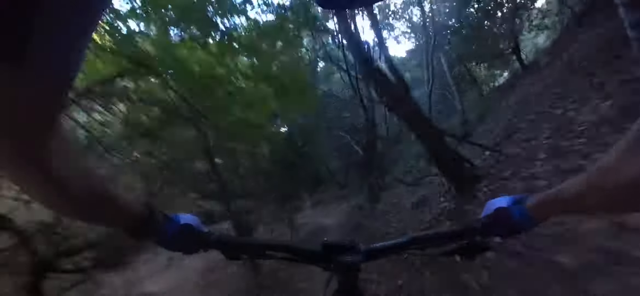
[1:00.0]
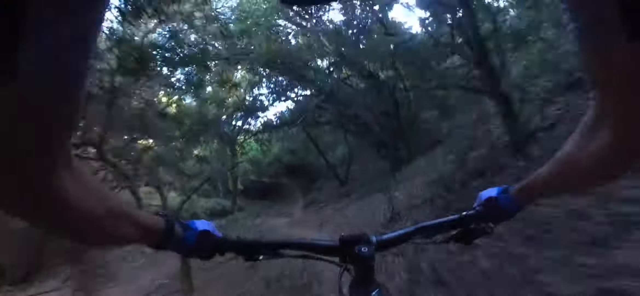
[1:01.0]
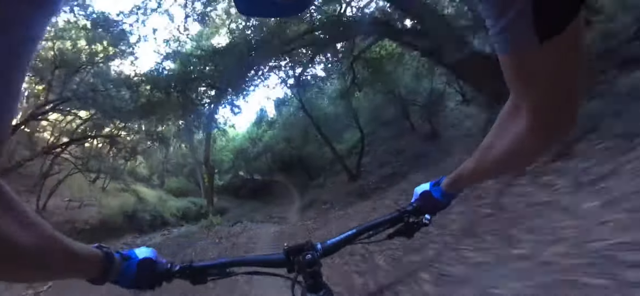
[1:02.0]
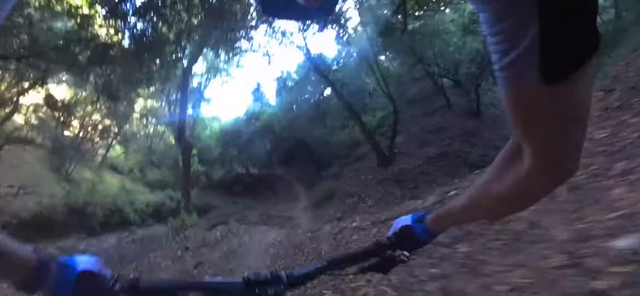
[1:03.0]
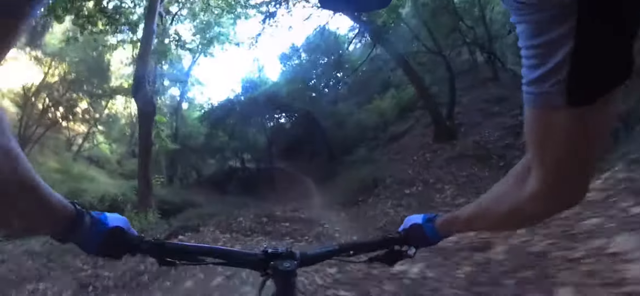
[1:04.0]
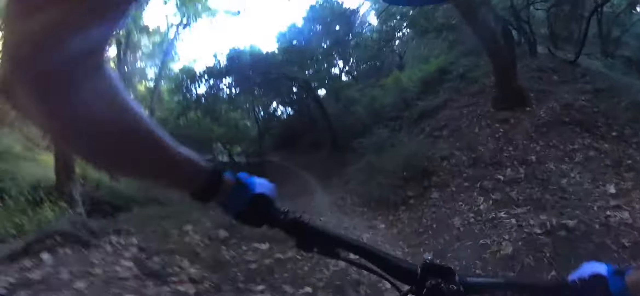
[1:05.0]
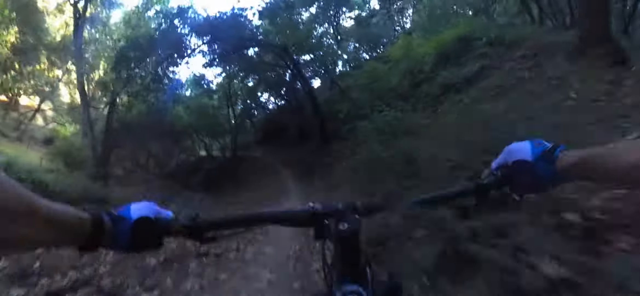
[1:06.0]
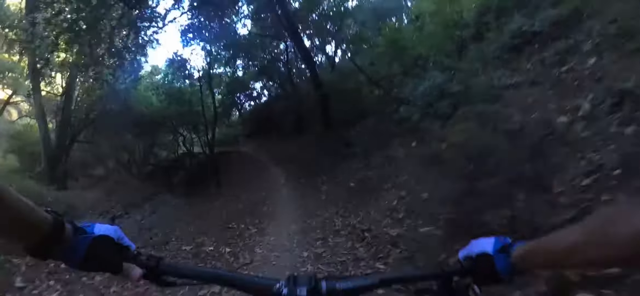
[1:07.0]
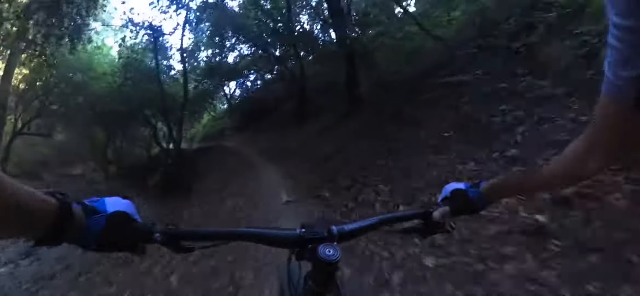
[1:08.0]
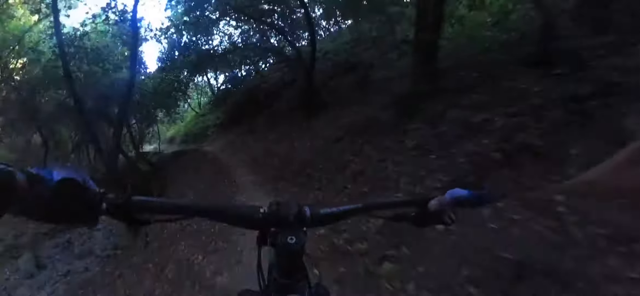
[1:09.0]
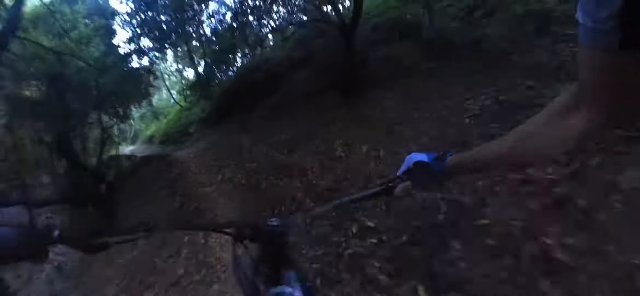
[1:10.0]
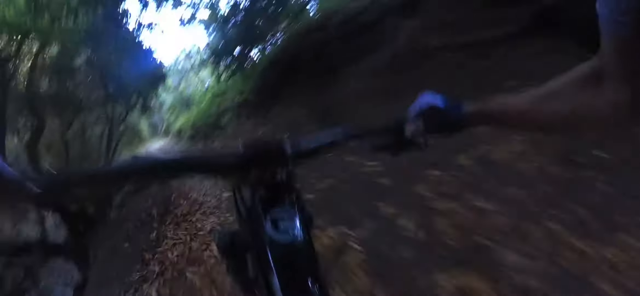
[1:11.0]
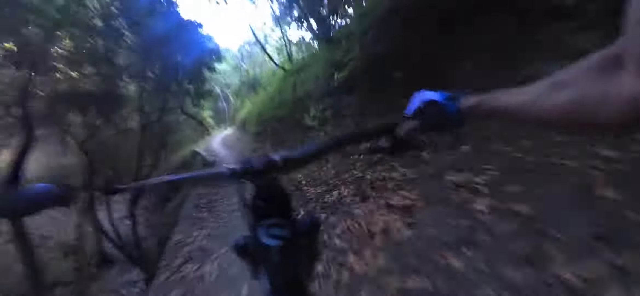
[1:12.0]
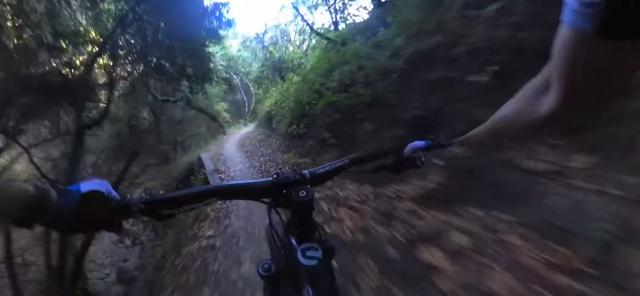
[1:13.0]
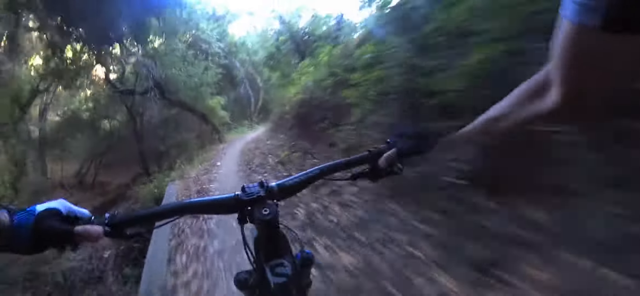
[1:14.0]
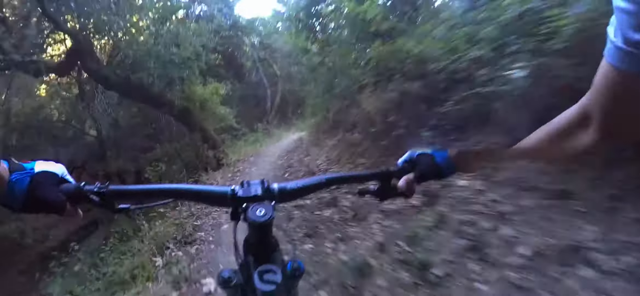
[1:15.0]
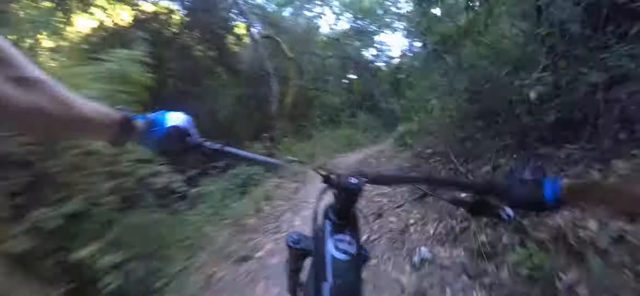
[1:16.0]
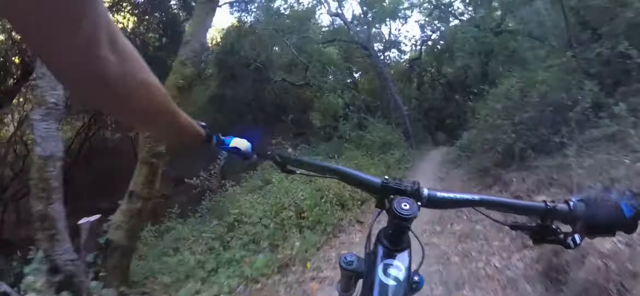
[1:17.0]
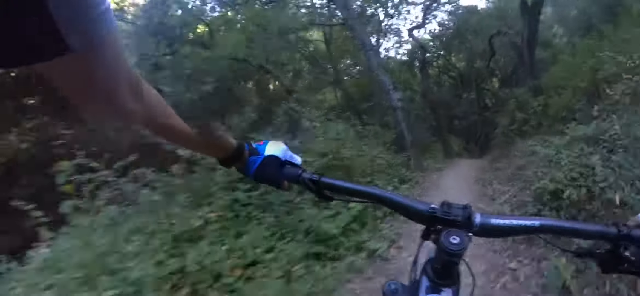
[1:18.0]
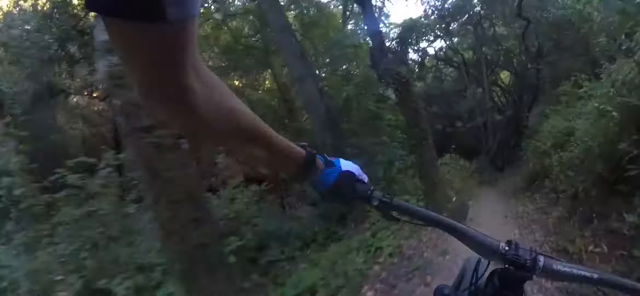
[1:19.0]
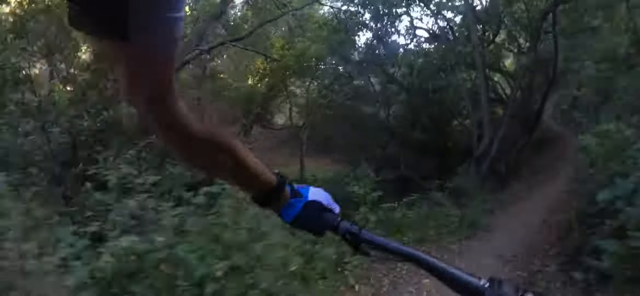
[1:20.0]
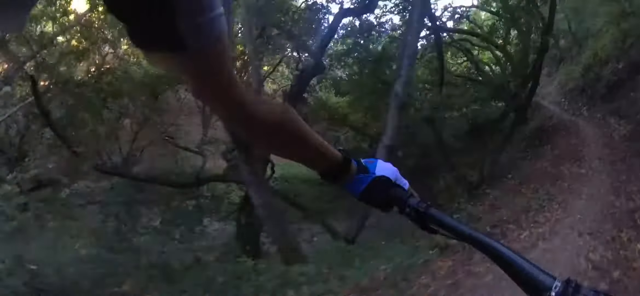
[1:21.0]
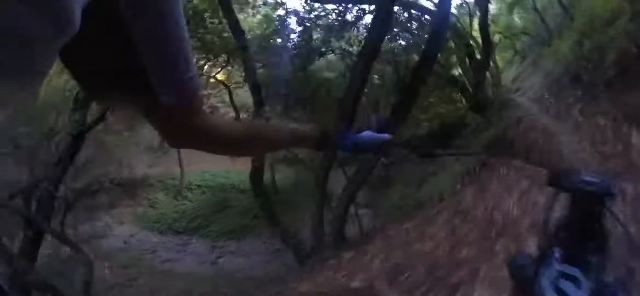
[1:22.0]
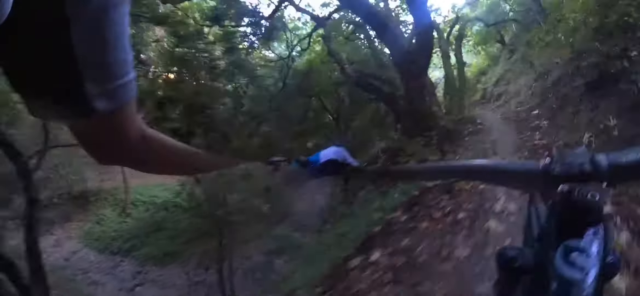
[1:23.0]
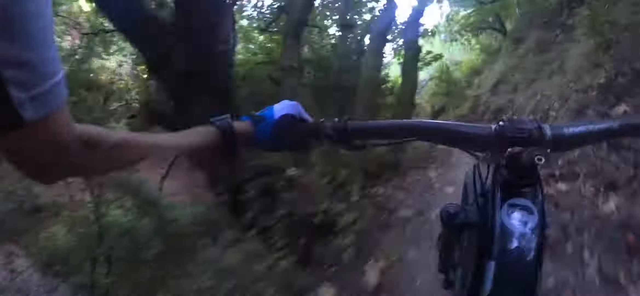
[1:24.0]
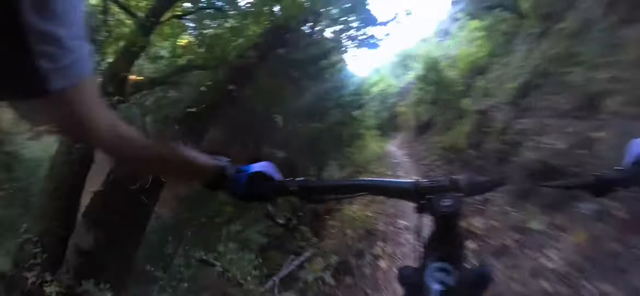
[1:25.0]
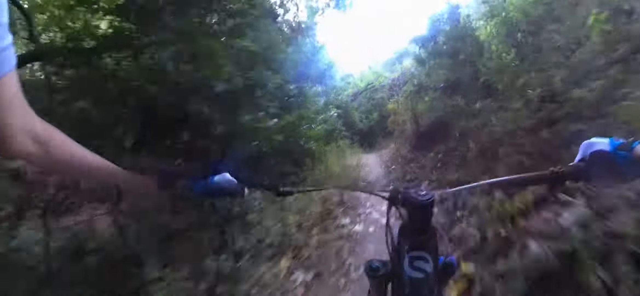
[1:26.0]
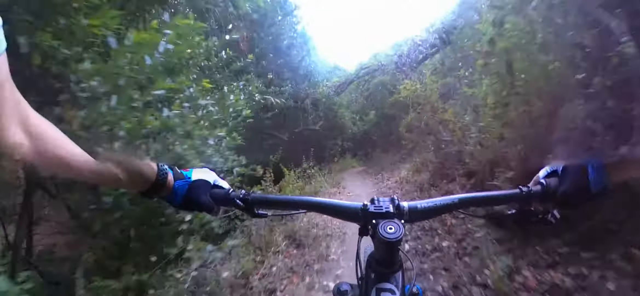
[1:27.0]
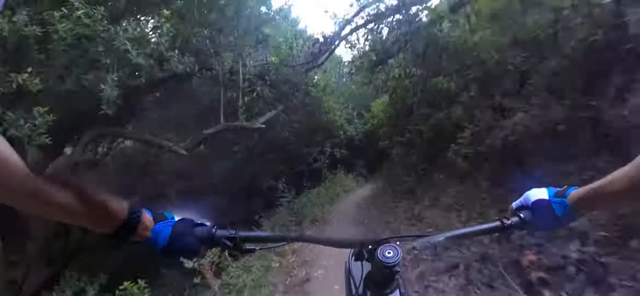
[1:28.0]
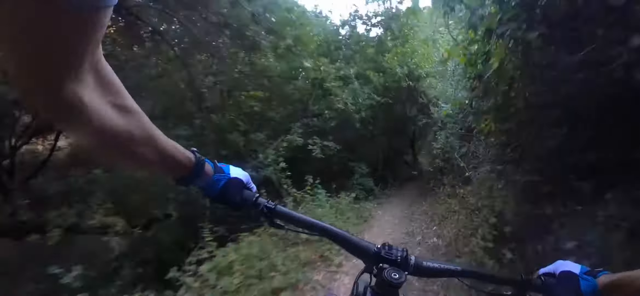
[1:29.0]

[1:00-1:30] A white cyclist in gloves of two shades of blue, darker around the palm area and lighter right over the knuckles, rides a black bicycle, with the handlebars visible. He wears a short-sleeved shirt in two shades of blue, lighter around the bicep and darker around the tricep. He rides along a brown dirt road path through a forest, surrounded by trees, brush, leaves, logs, some rocks, and discarded leaves off the side of the road. The path is quite narrow in certain sections, and it goes bright and then a bit dark as he passes through a number of trees. The brush and branches are very close to him, and some sections of the forest get quite dark even though it is sunny.